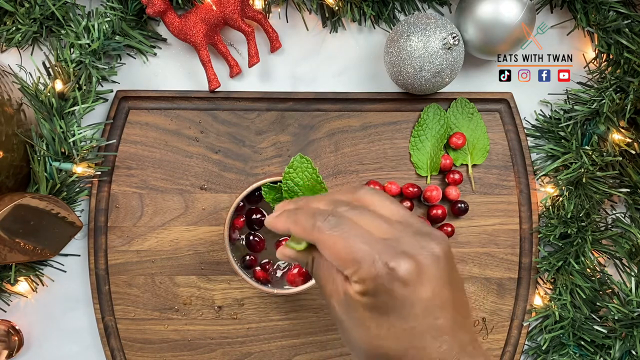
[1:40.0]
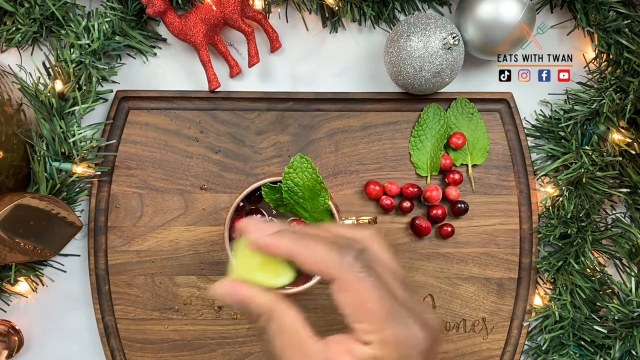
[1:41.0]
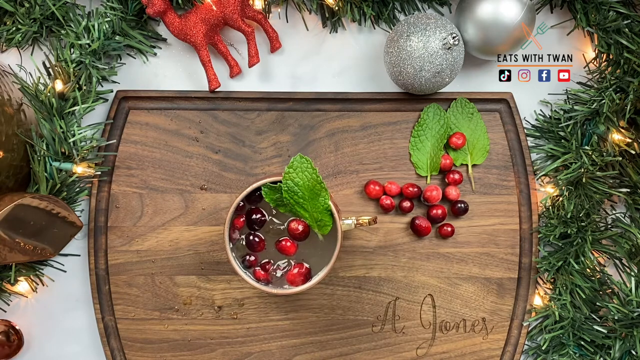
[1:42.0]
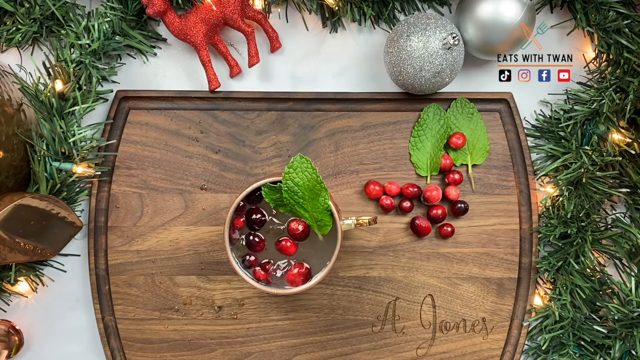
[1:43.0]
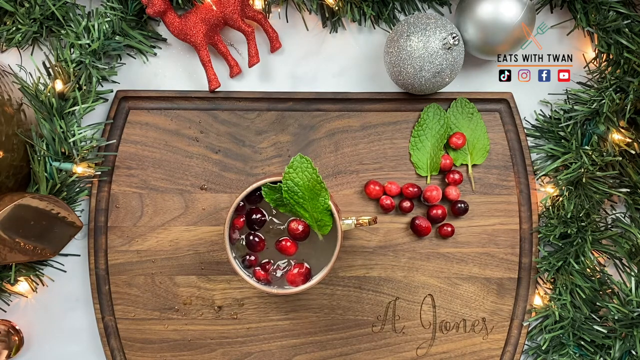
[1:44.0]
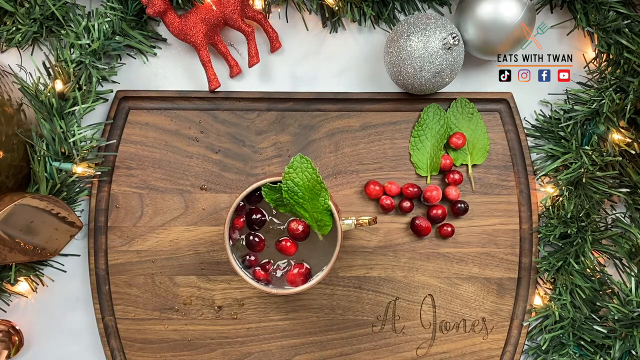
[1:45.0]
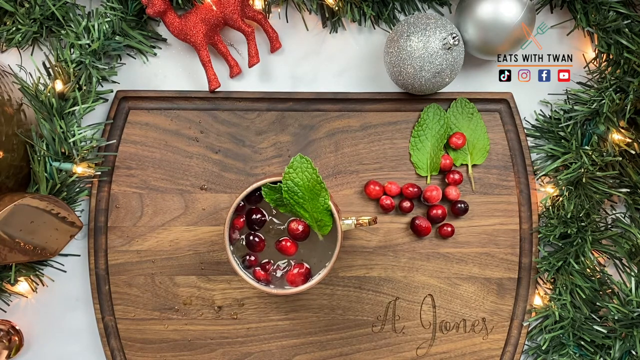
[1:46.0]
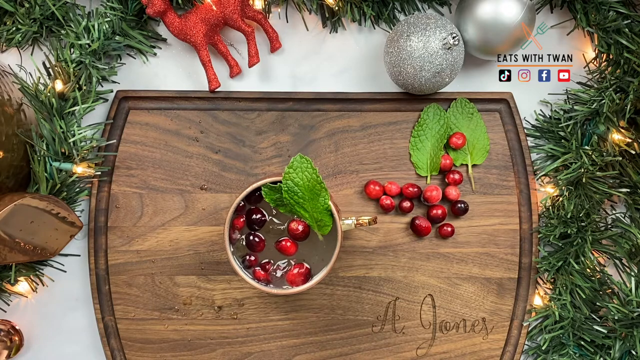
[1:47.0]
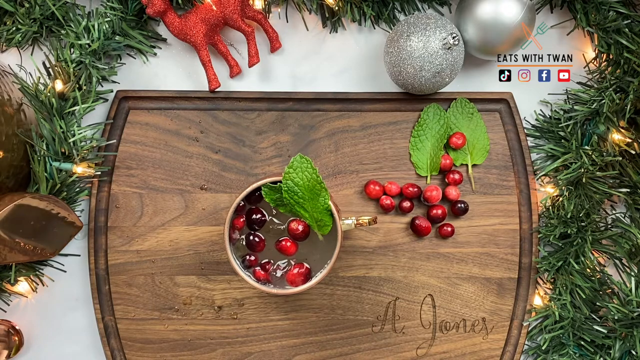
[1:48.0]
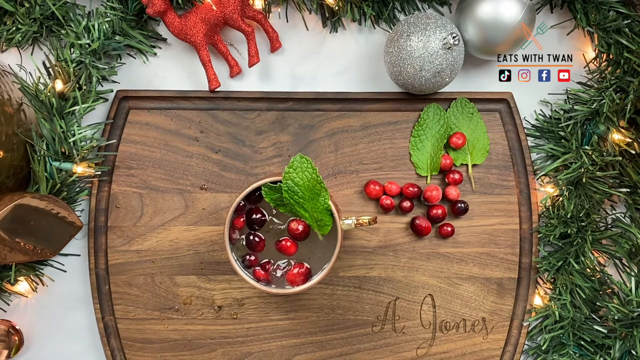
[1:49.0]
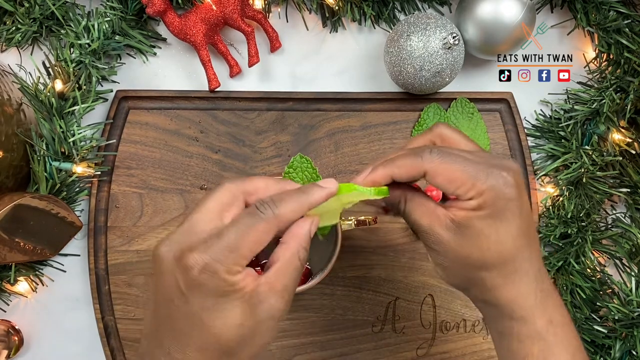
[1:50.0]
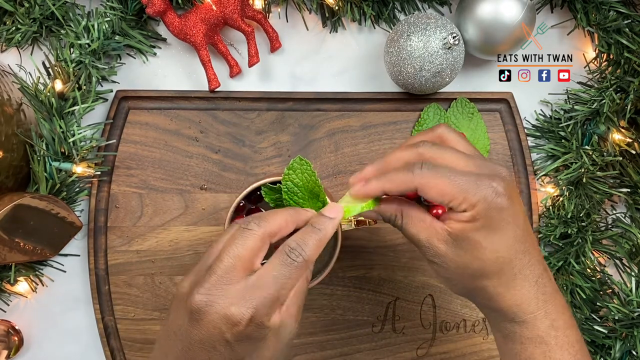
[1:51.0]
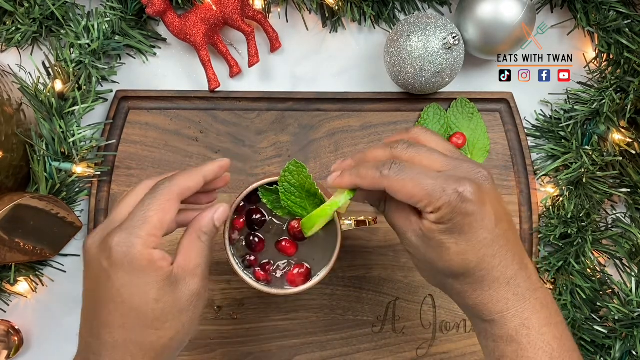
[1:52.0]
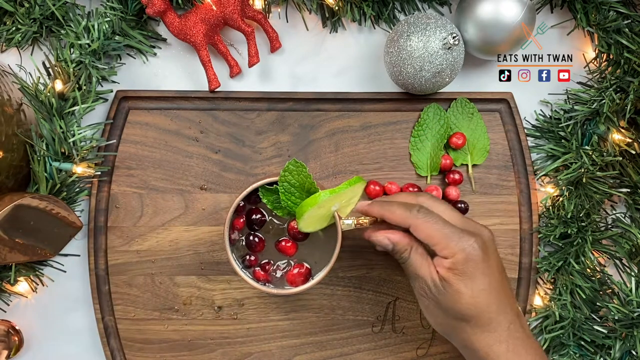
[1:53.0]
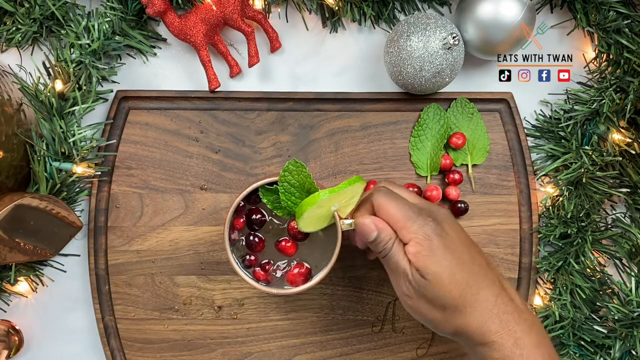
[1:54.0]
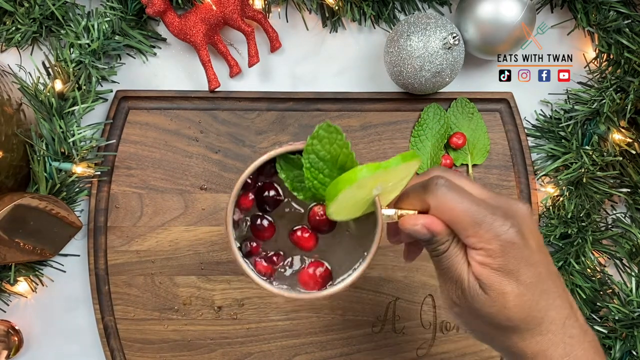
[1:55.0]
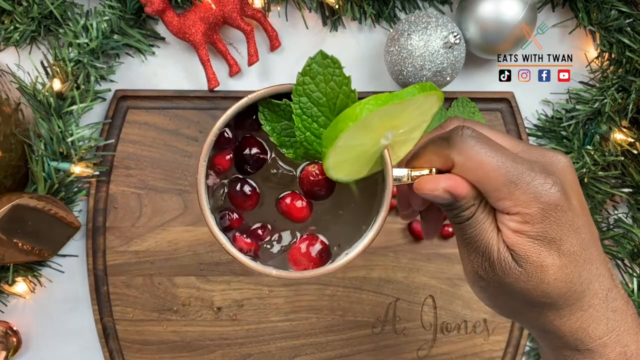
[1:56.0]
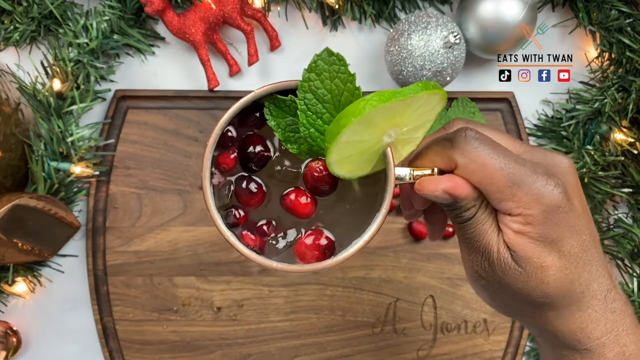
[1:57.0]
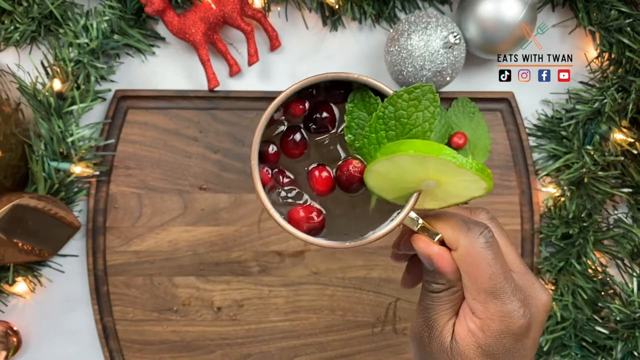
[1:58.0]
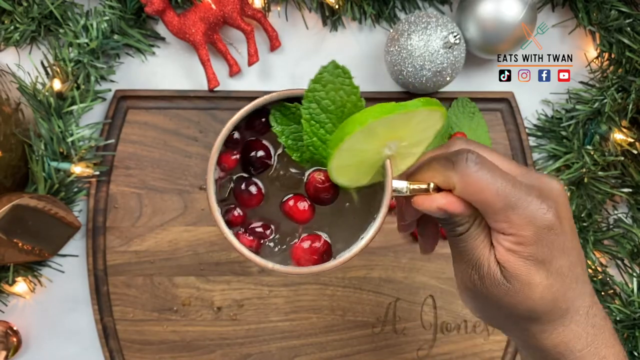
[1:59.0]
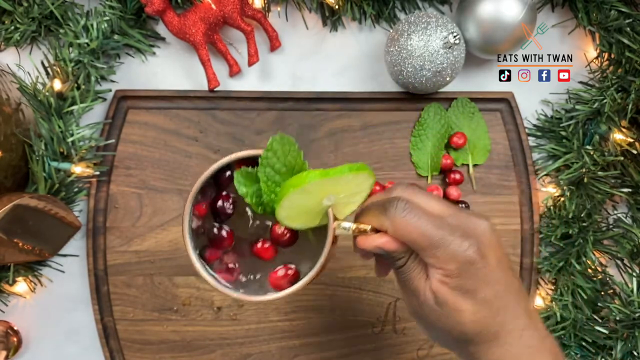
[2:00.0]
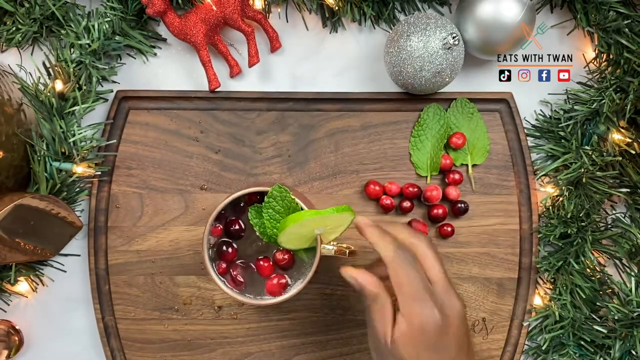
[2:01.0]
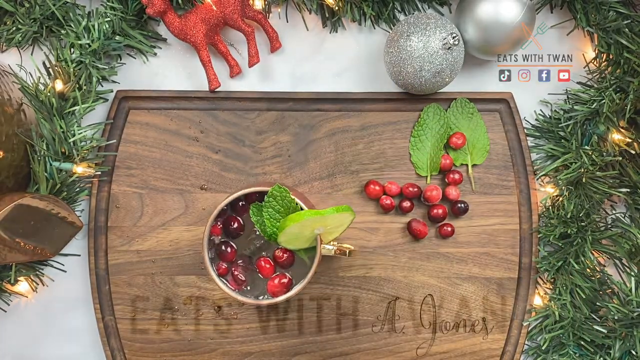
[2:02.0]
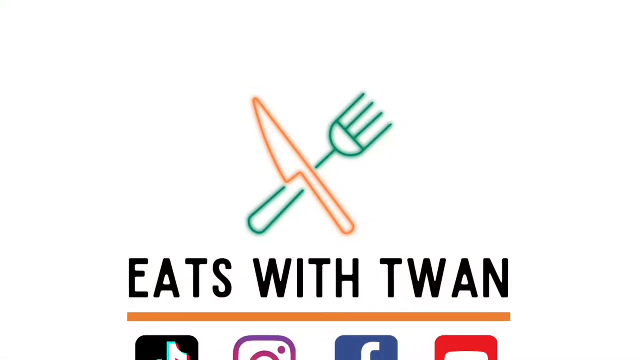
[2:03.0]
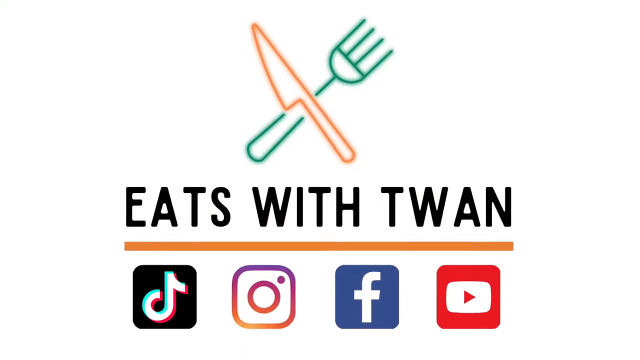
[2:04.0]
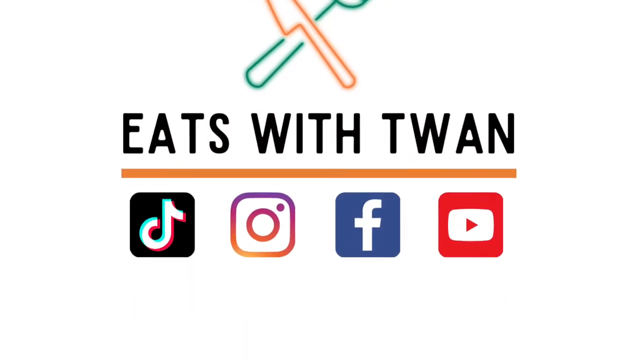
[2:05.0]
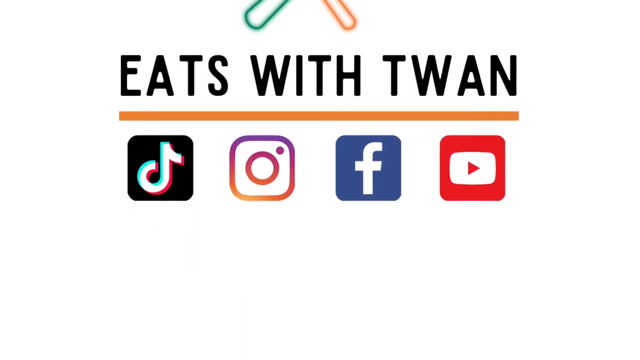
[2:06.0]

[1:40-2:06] A top view of the cutting board and a front view of someone show him finishing squeezing a lime-like fruit into a mug that looks to contain an alcoholic drink, along with pomegranates and two green leaves. He brings out another cut lime and puts it on the edge of the mug, then brings the drink up close to the camera and kind of tilts it around to show it off. The video then goes to a light outro screen showing a fork and knife logo, the text "Eat Swift Juan", and the icons of social media apps including TikTok, Instagram, Facebook and YouTube. The cutting board seen in the video is brown wood.